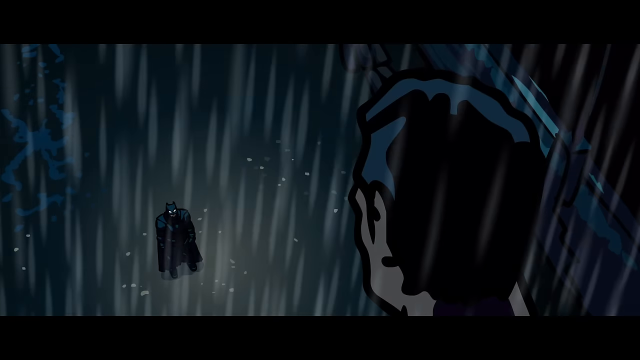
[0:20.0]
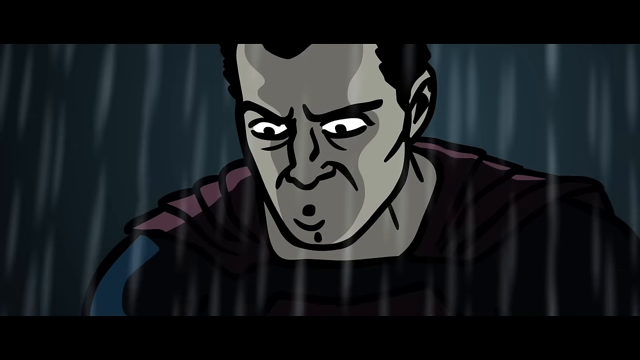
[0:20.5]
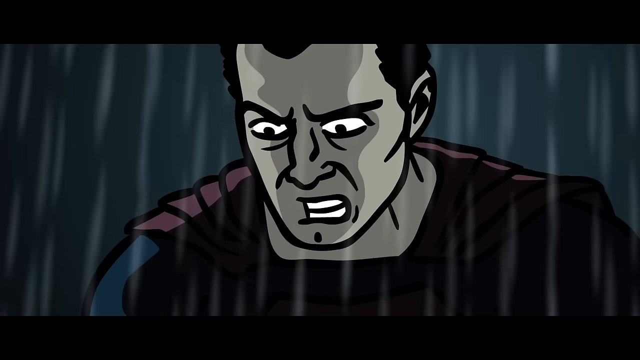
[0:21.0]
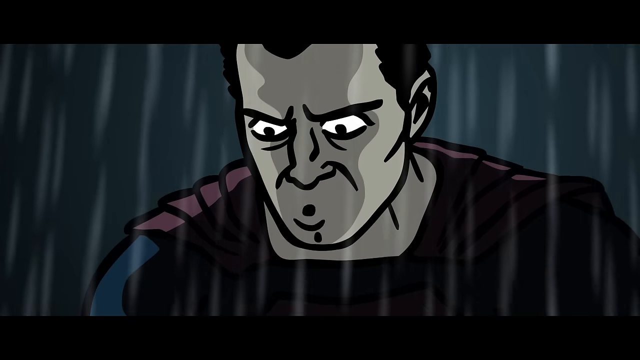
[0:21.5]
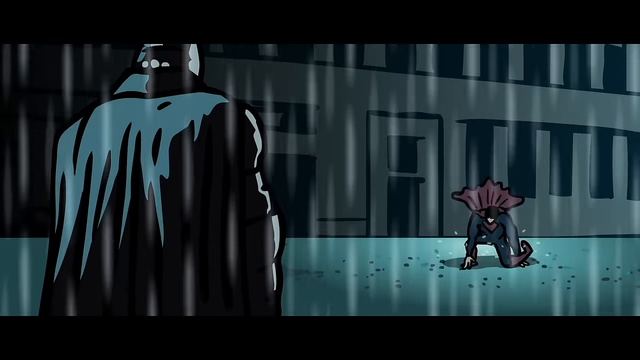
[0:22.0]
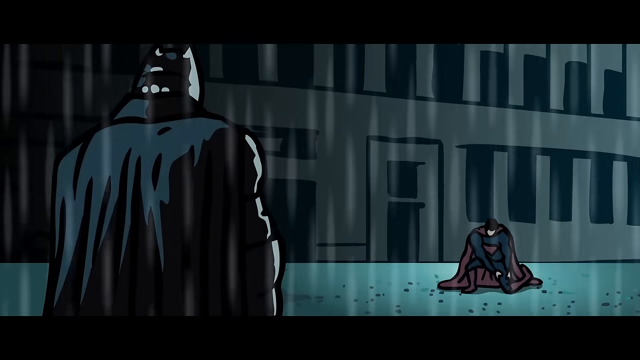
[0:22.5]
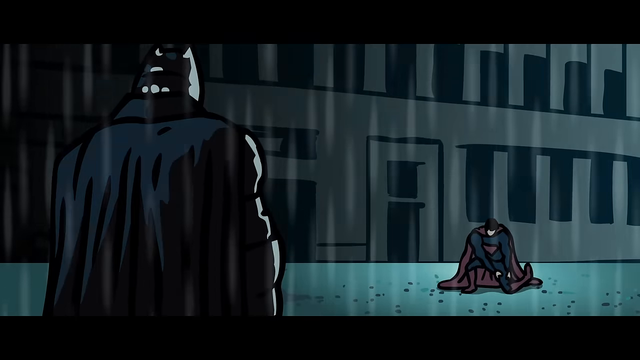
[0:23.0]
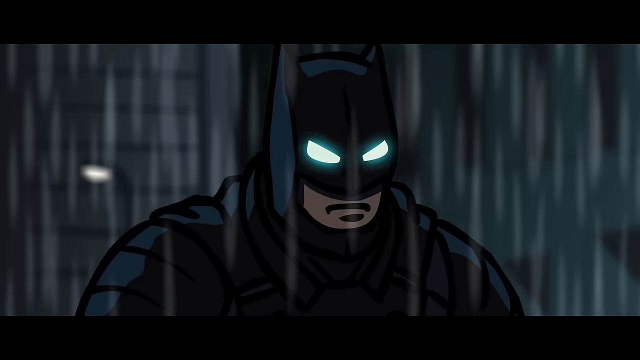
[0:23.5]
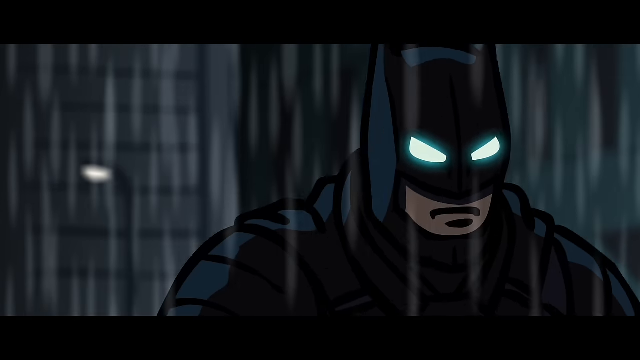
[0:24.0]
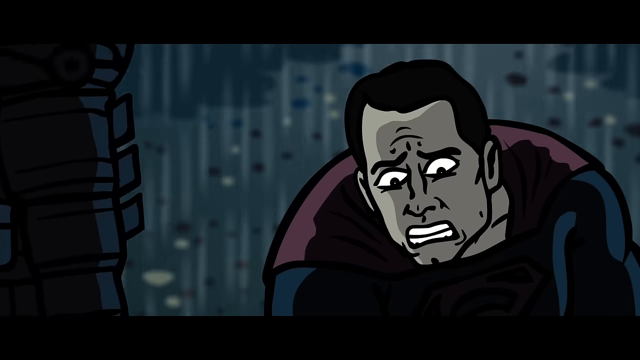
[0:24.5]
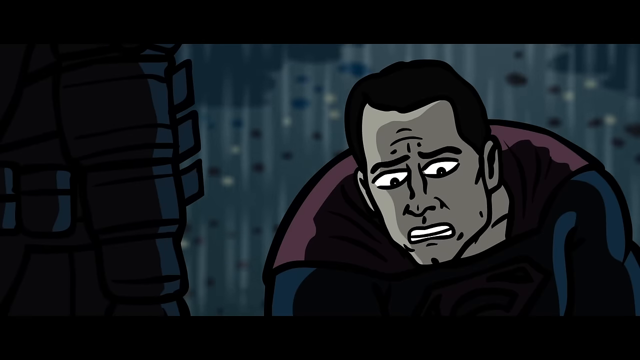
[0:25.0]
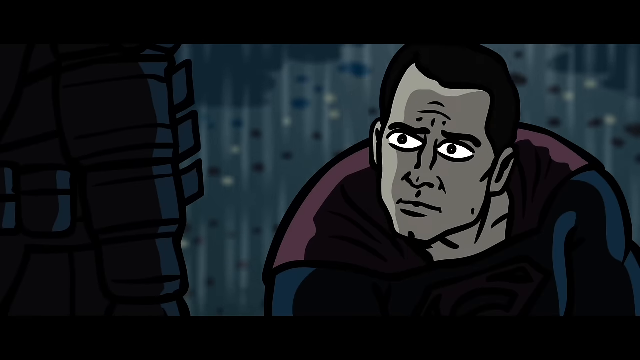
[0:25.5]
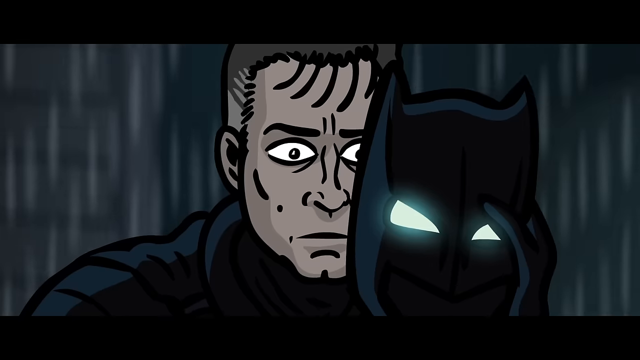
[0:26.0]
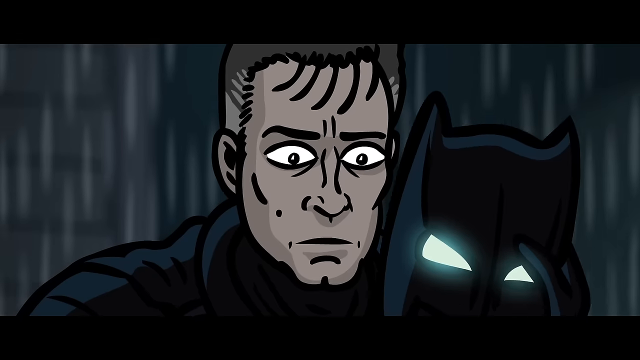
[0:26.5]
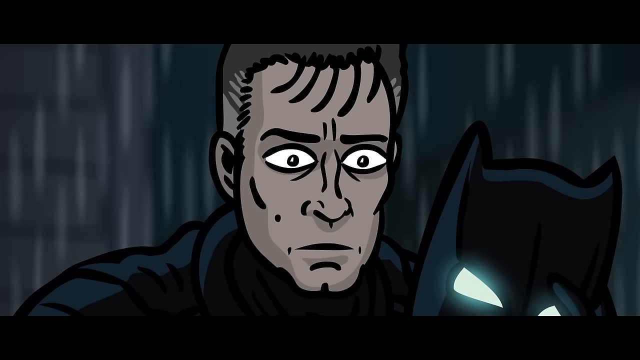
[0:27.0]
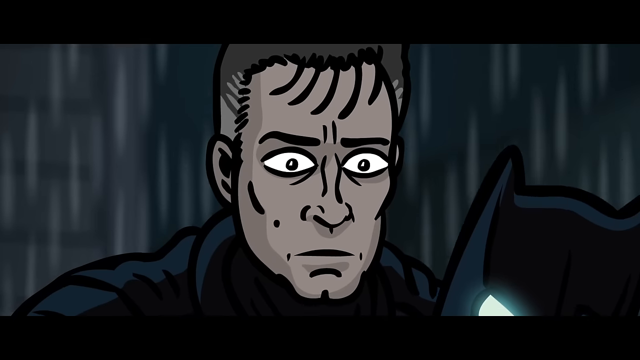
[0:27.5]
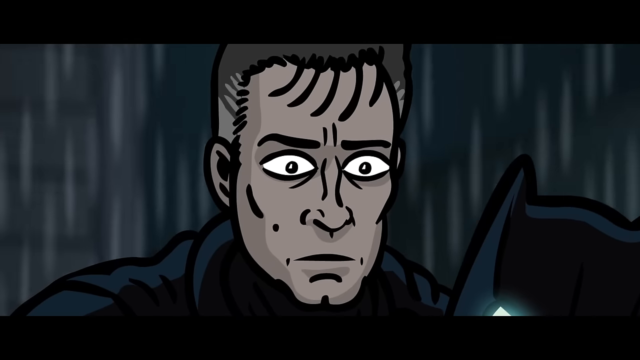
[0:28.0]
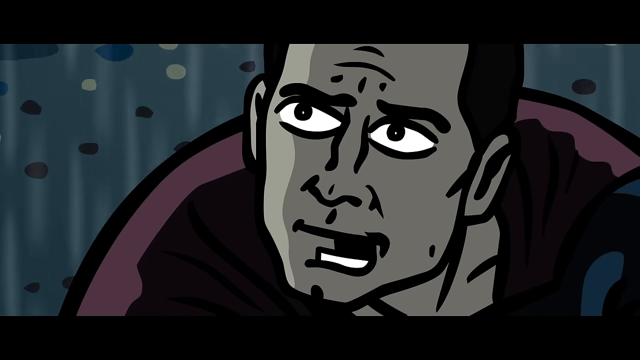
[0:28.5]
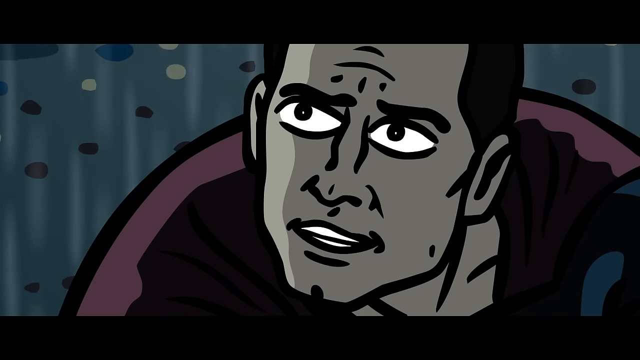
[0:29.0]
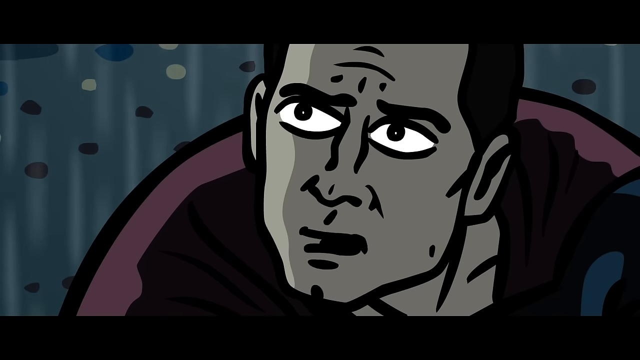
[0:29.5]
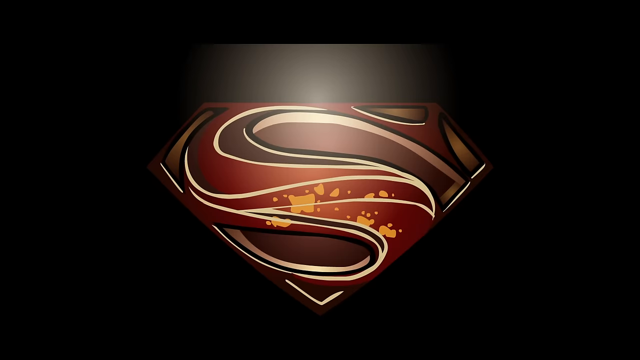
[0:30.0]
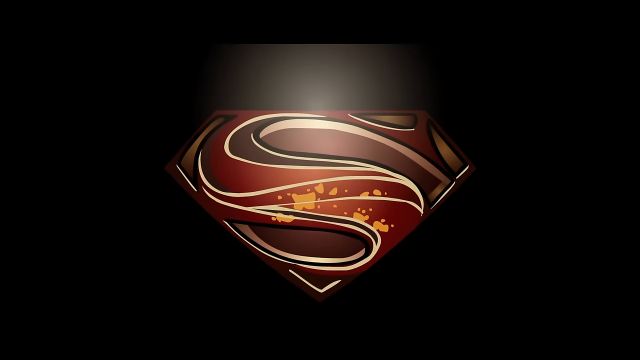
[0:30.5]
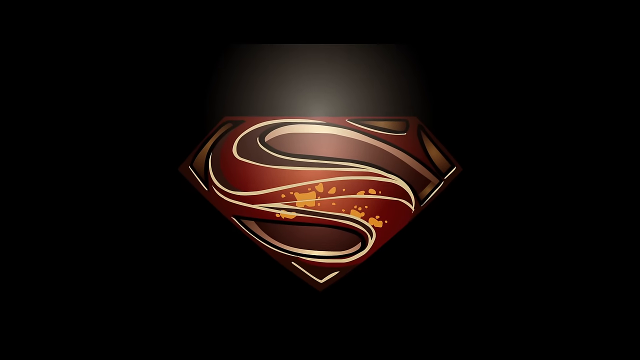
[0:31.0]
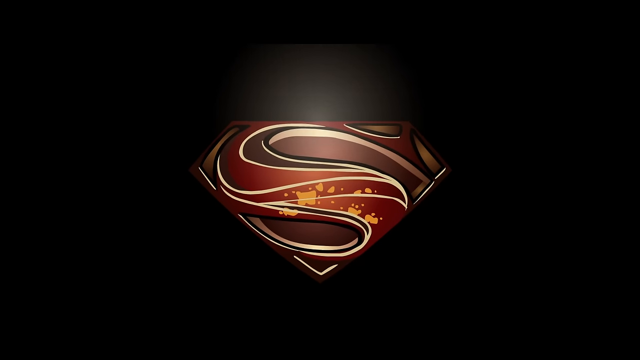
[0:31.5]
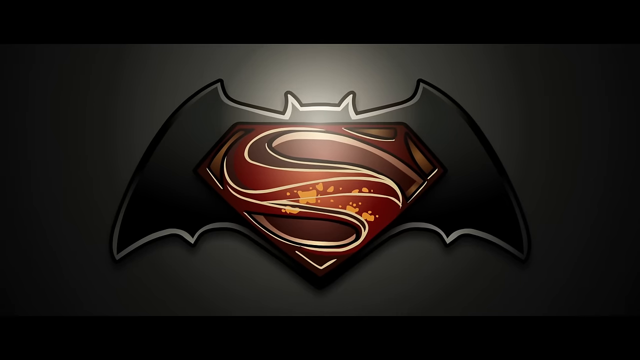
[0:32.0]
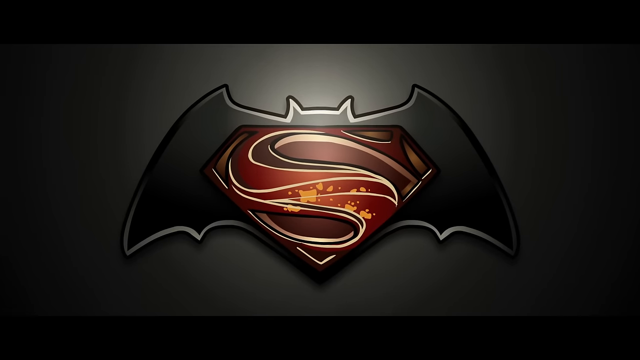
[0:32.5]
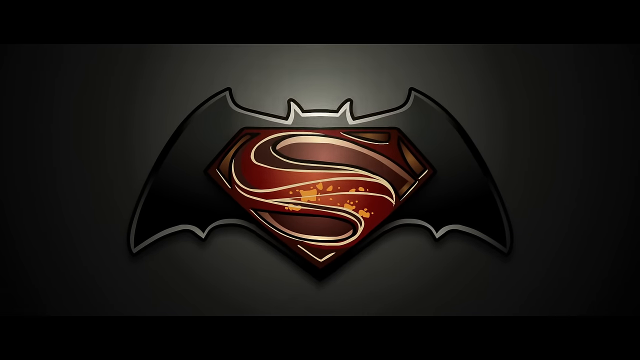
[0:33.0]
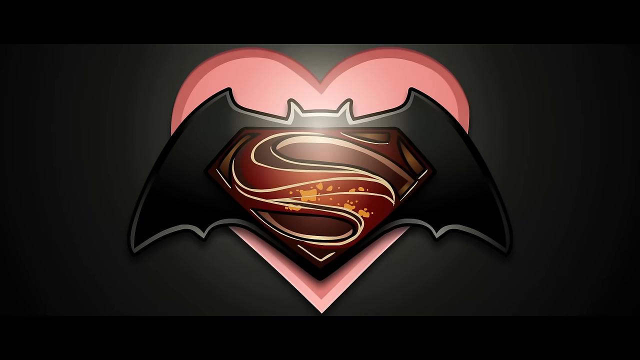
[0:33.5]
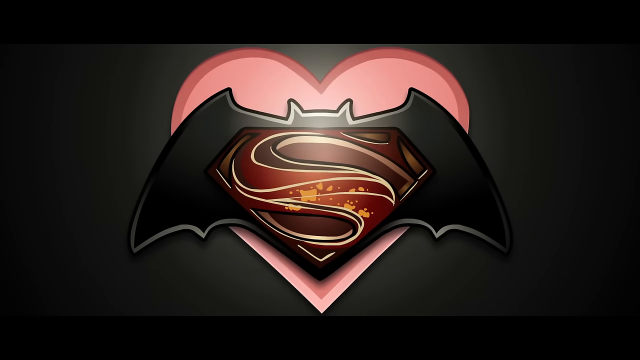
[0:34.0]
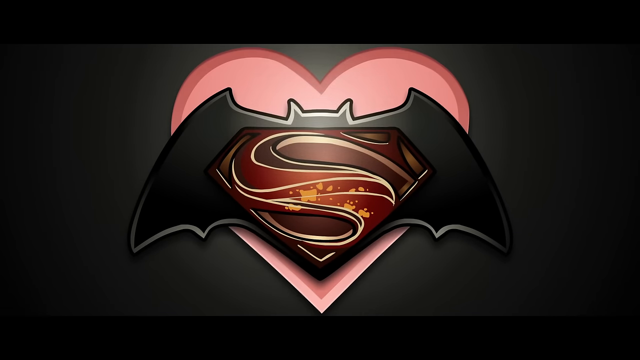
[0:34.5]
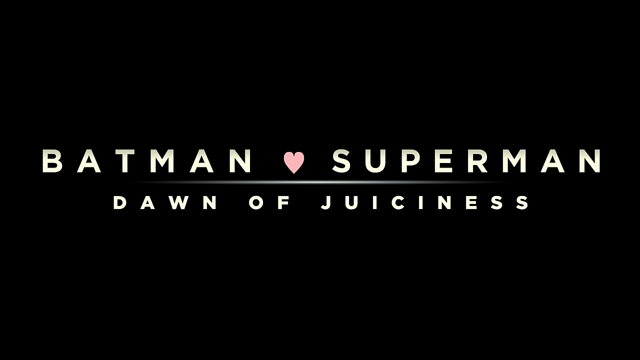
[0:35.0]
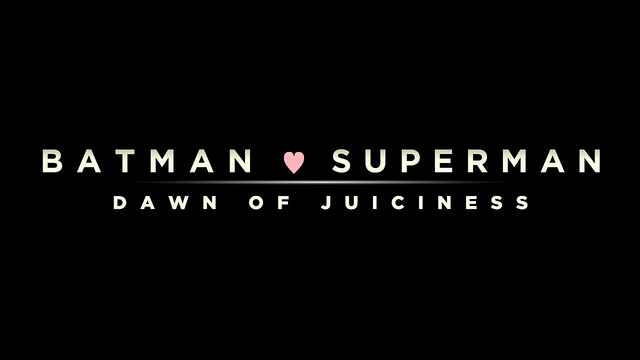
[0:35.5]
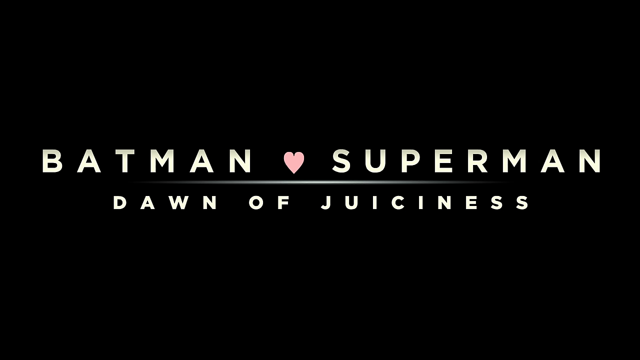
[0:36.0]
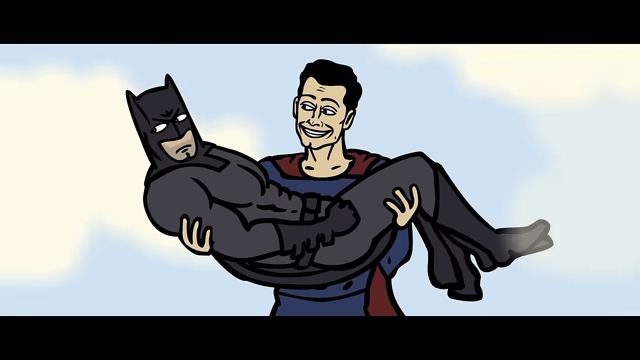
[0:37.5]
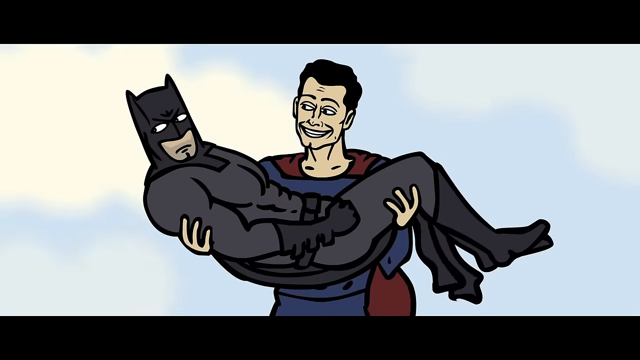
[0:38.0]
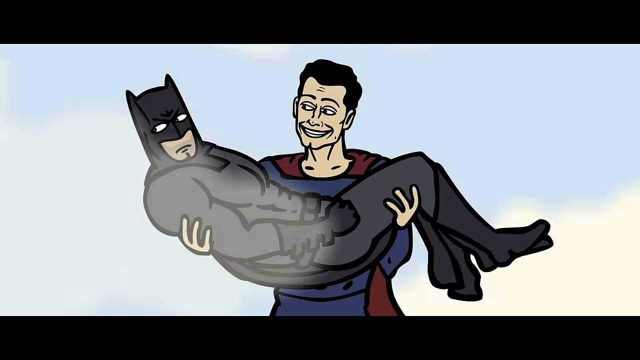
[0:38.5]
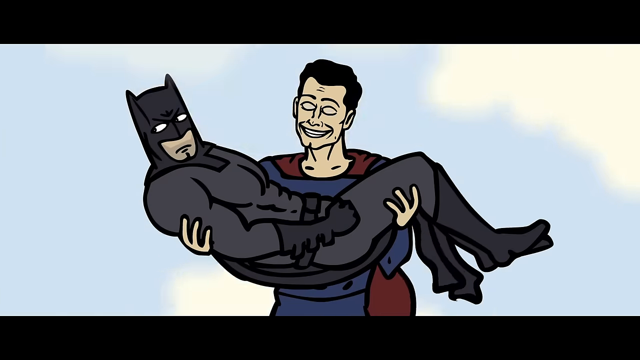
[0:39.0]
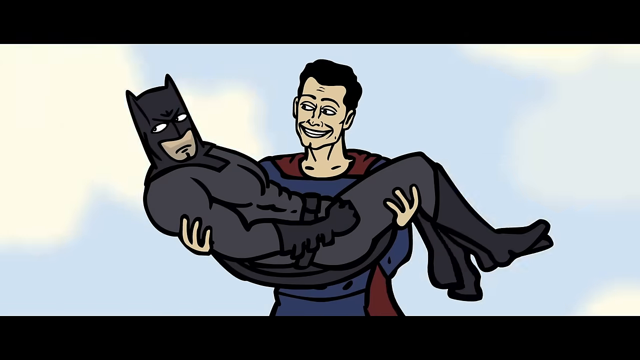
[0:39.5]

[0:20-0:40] Batman stands in the rain, and on top of a building above him stands a figure that looks like Superman, possibly, wearing a blue suit with a red cape. Both are sort of crudely drawn versions of Superman and Batman. The view shifts to look over Batman's shoulder at his back, with Batman on the left side of the screen. Superman lands on the ground to the right, out in front of Batman, and appears to grab his left leg as he lands. Batman's eyes glow. It is raining quite a bit, and Batman walks through the rain toward Superman. Superman has a worried look and is looking down, then looks up at Batman, who stands over him. Batman removes his mask. In a close-up of Superman's face, he looks up at Batman and says something. The Superman logo appears.